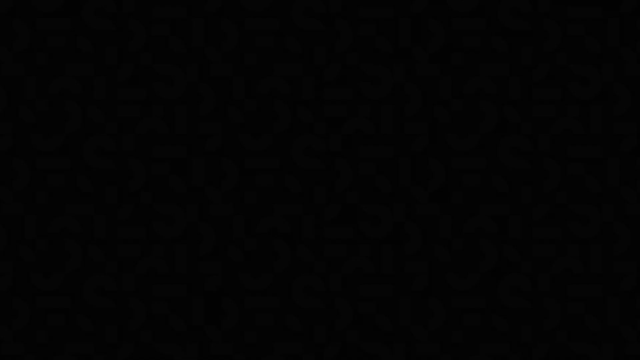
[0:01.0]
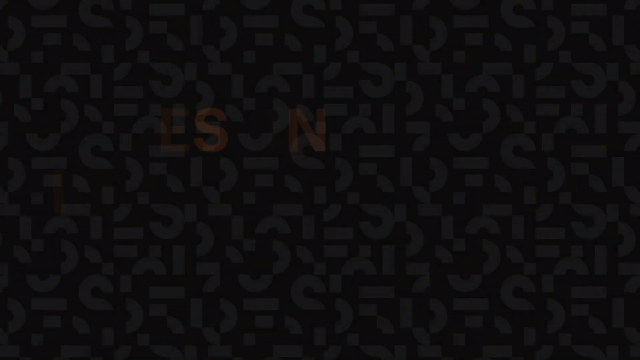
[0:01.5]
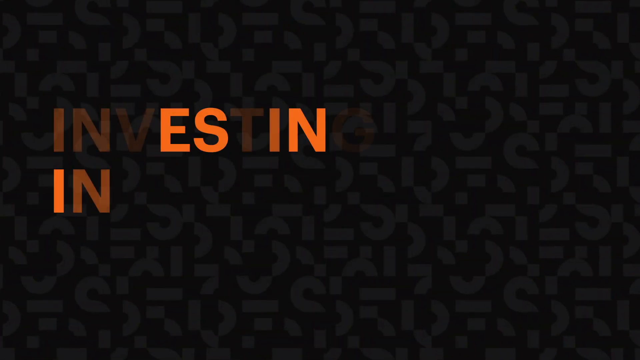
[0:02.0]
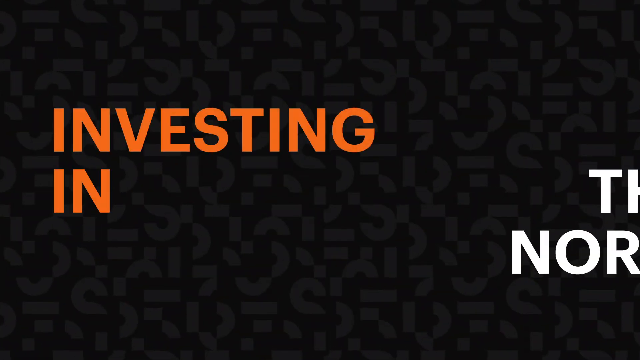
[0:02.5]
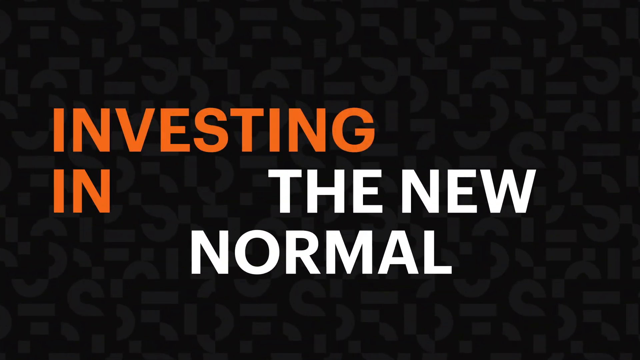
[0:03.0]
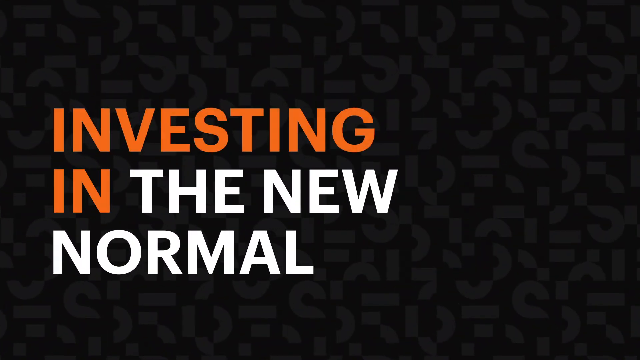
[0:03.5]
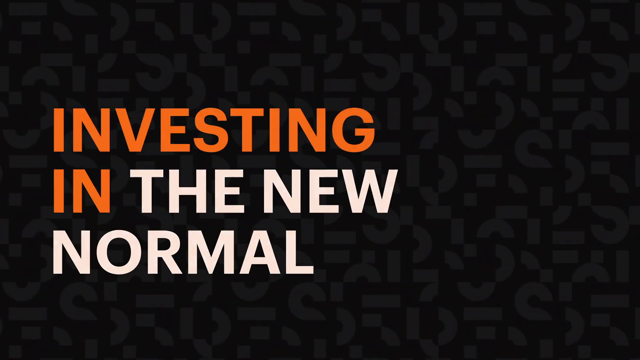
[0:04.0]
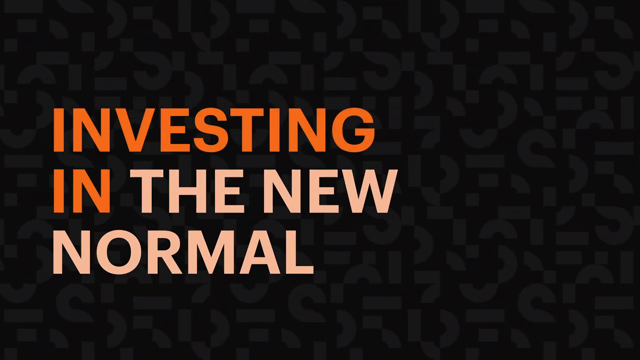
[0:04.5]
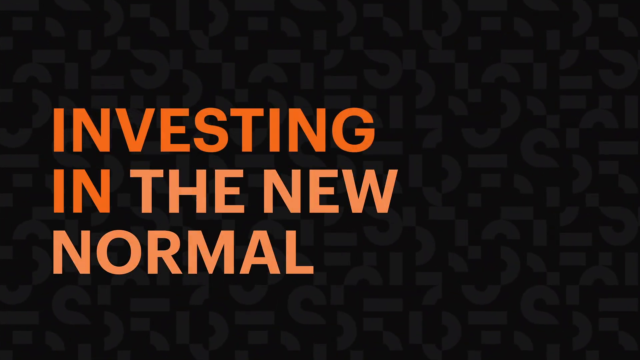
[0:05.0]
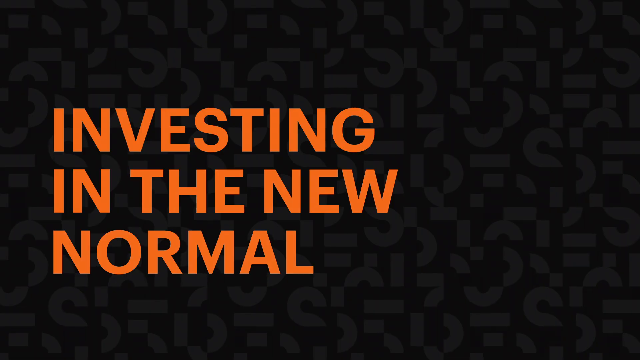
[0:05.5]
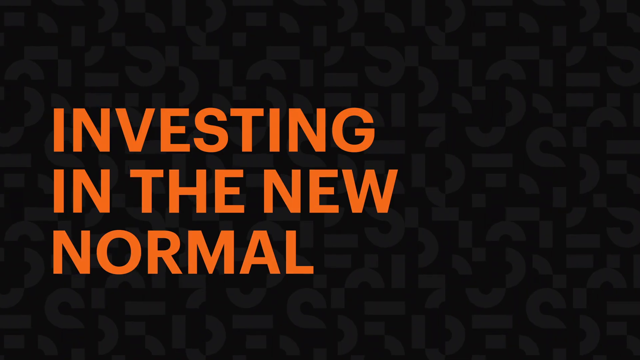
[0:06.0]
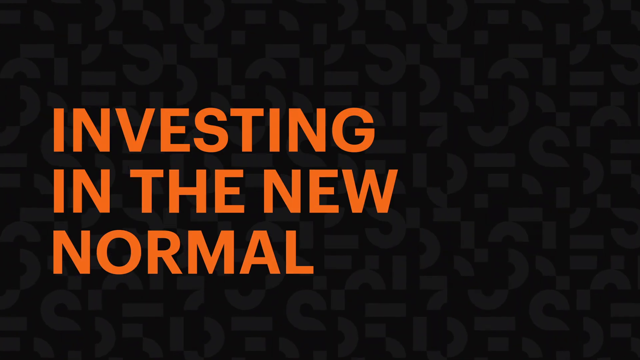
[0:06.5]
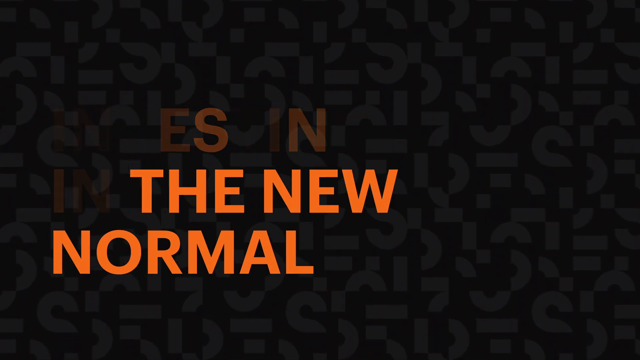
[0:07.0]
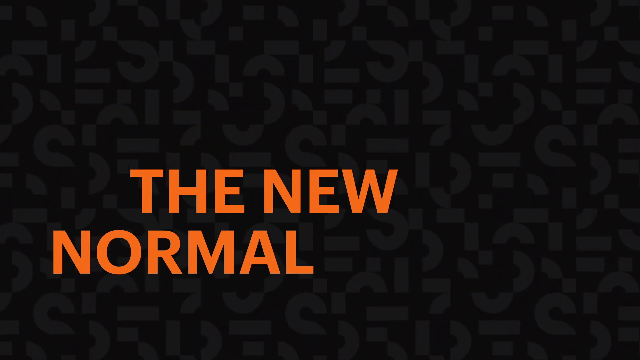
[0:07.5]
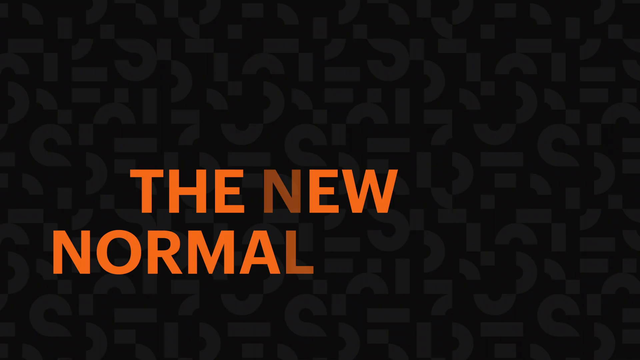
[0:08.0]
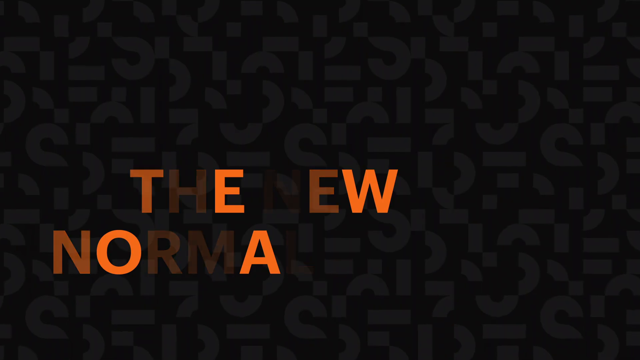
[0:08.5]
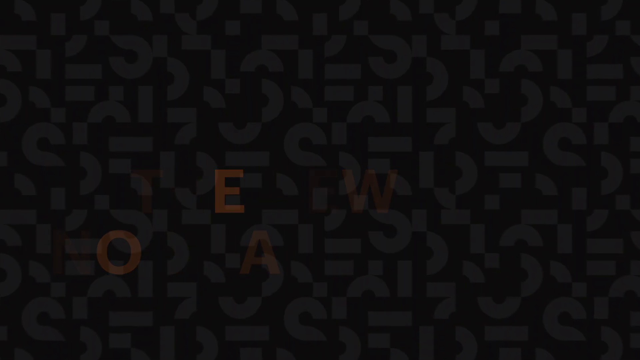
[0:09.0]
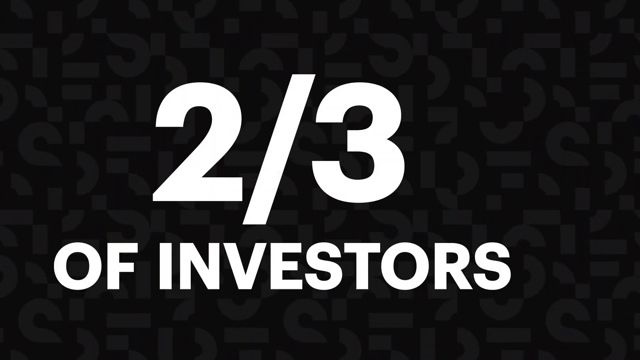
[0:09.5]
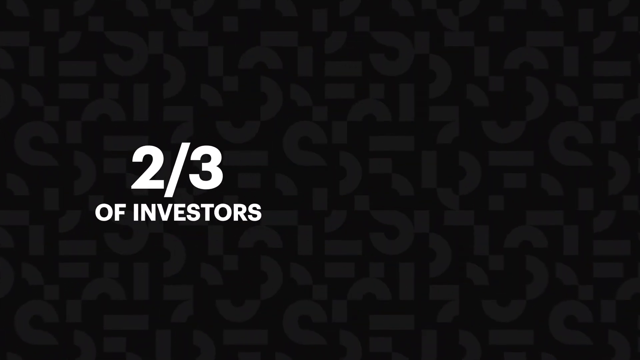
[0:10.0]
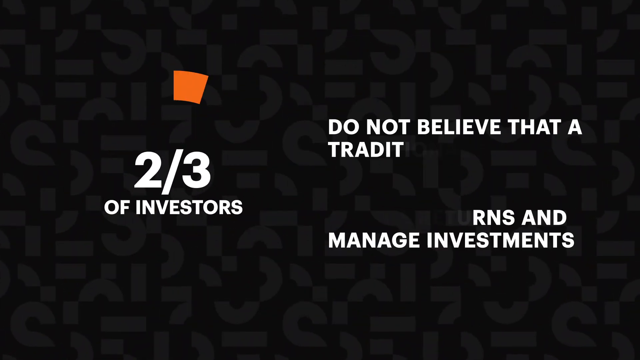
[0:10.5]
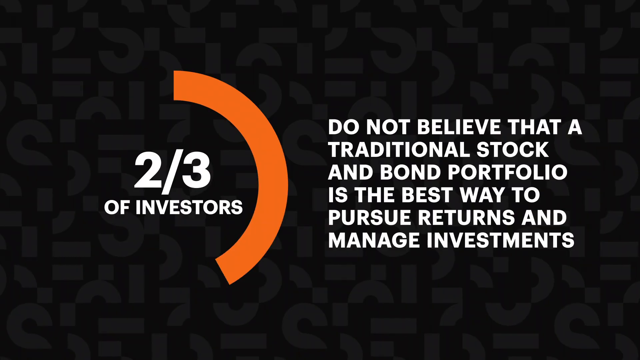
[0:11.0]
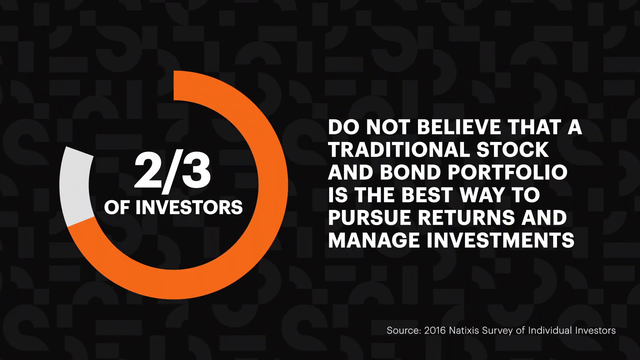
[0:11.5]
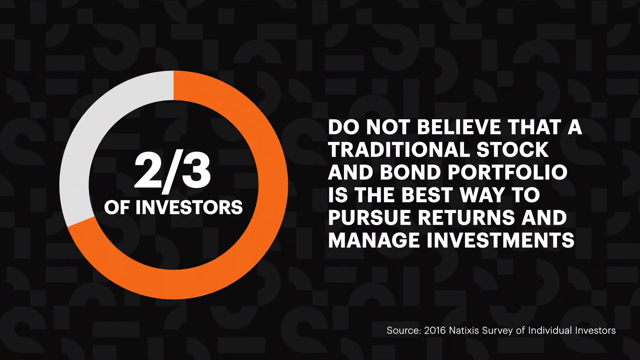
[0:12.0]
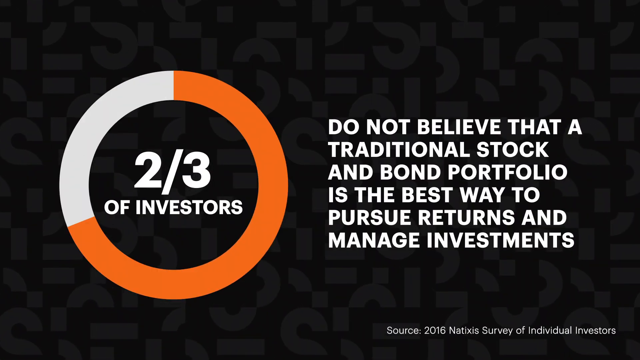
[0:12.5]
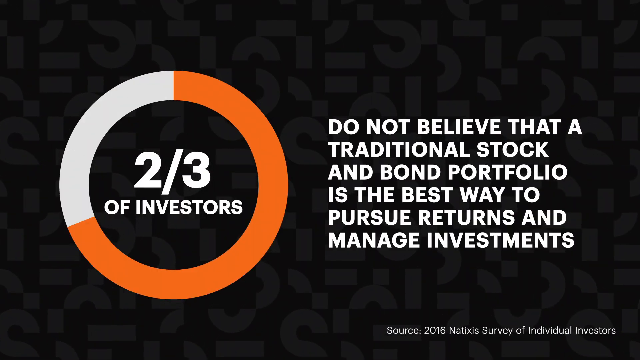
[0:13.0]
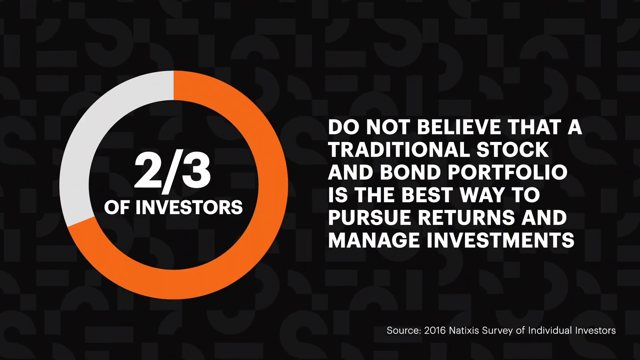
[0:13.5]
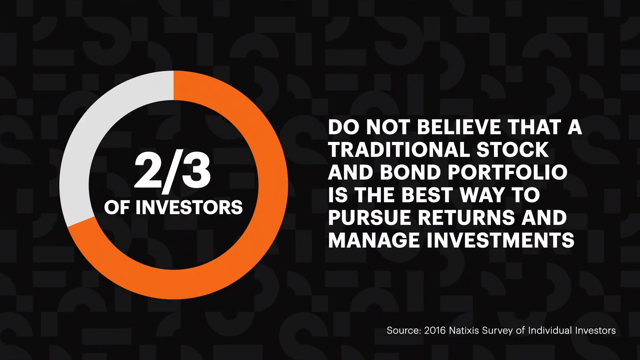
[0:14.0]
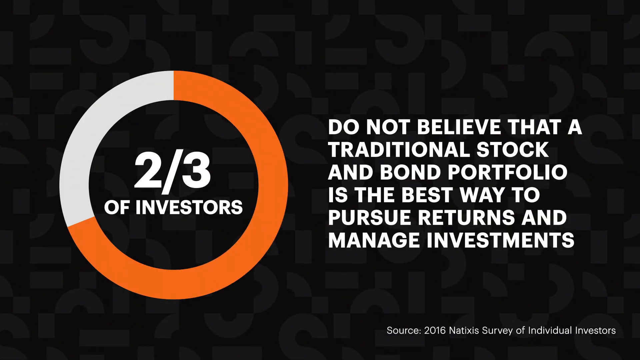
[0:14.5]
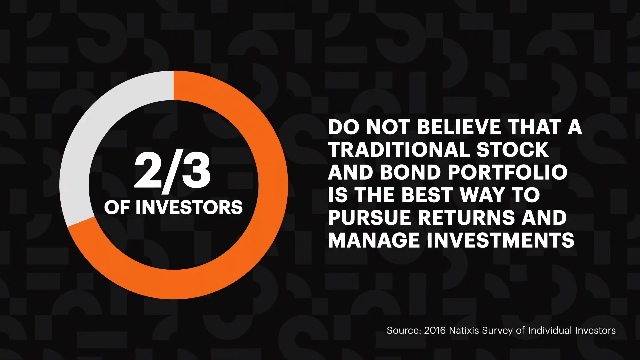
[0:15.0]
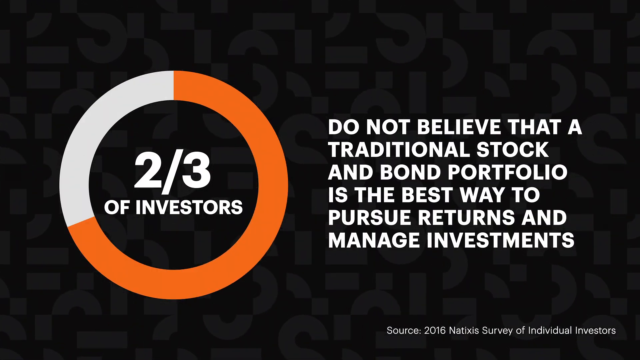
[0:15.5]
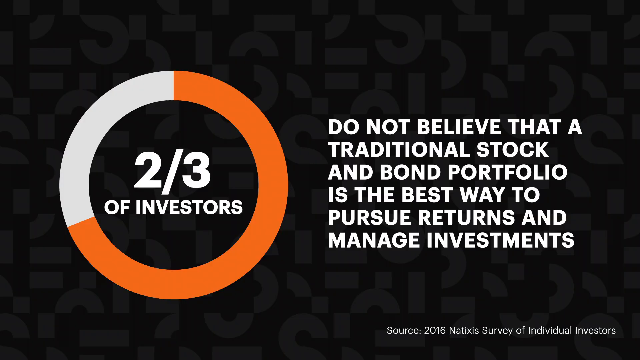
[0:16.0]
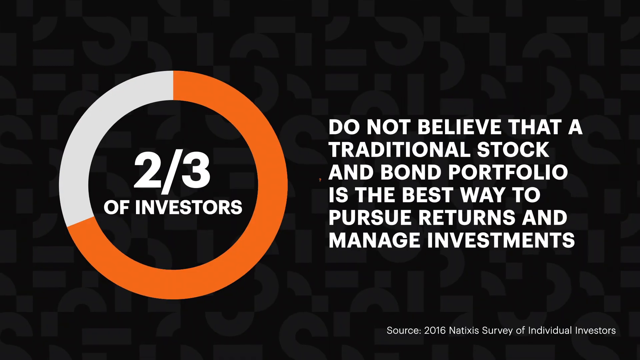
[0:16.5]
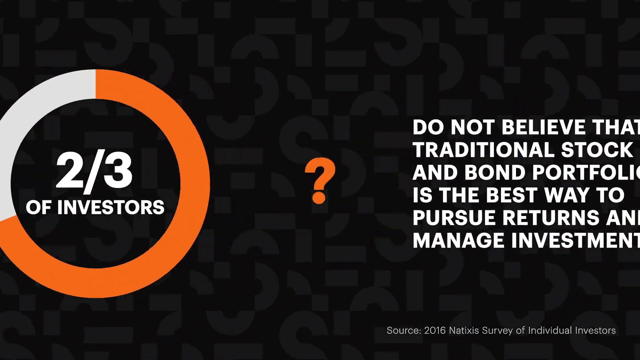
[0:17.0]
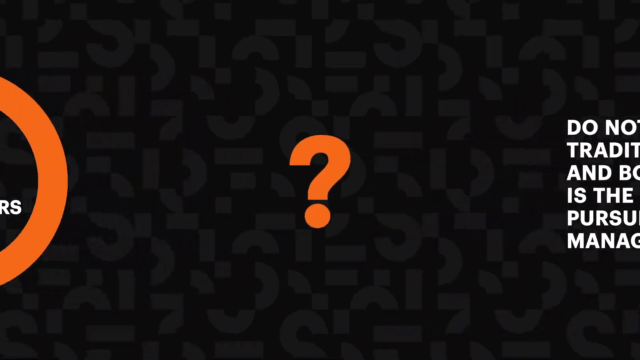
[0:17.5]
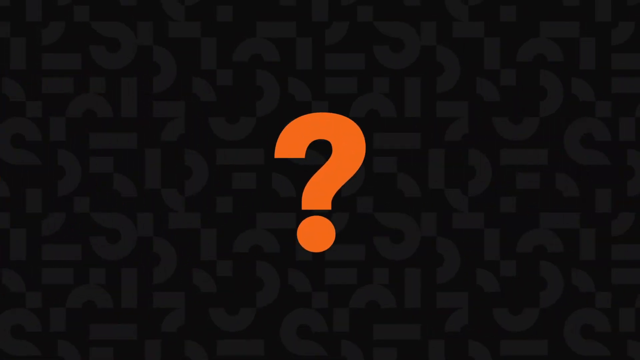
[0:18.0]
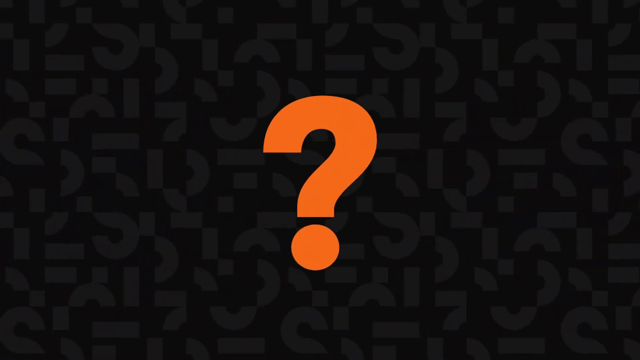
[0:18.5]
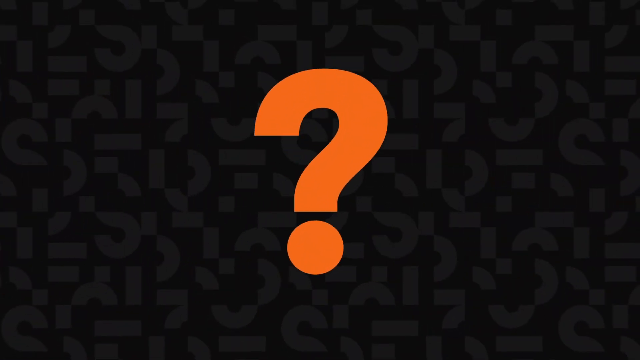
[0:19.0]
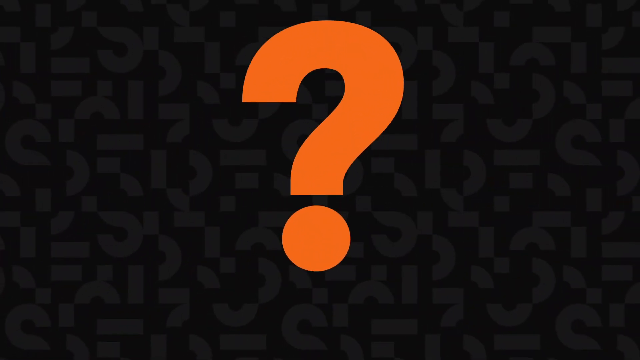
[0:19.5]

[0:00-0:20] The video opens on black and then fades in. In the background, pieces of the letter S appear in light gray in an organized pattern on a dark gray background. On the left side of the screen, all-caps text reads "investing in the new normal": the first two words, "investing in," are orange, and "the new normal" appears in white. "The new normal" then turns orange, and the text slowly fades off the screen. Next, white text appears: "two-thirds of investors do not believe that a traditional stock and bond portfolio is the best way to pursue returns and manage investments." The statistic "two-thirds of investors" is in white and all caps, and an orange circle with a white section circles it, like a circle graph. In the bottom right corner, some source information is faintly visible in small white text. A large orange question mark then starts to appear and slowly zooms in, getting bigger.